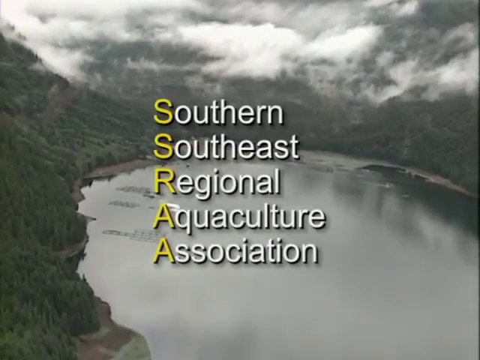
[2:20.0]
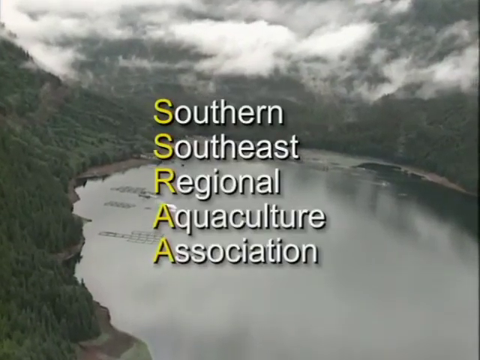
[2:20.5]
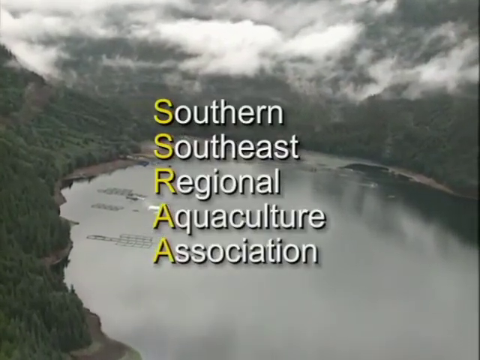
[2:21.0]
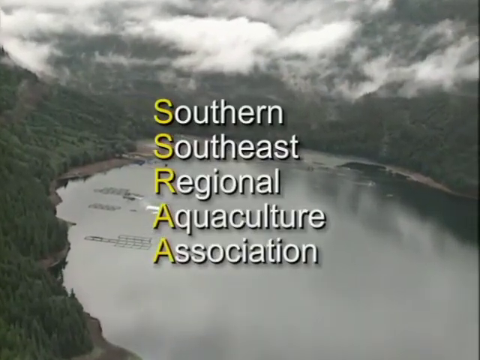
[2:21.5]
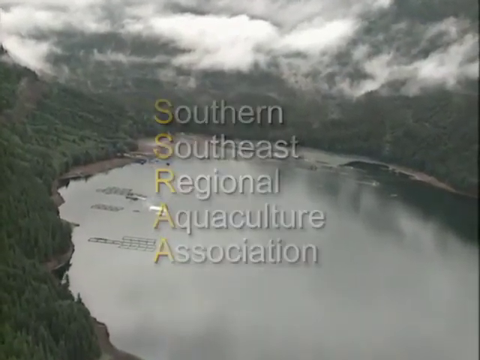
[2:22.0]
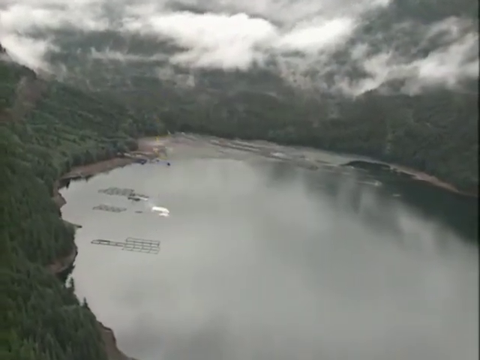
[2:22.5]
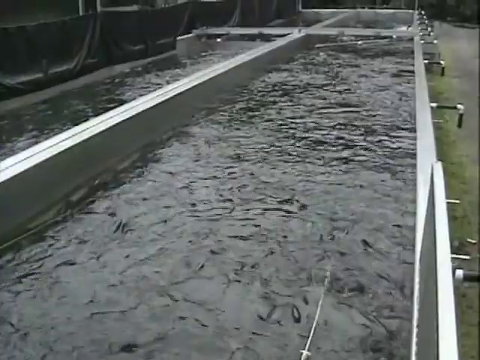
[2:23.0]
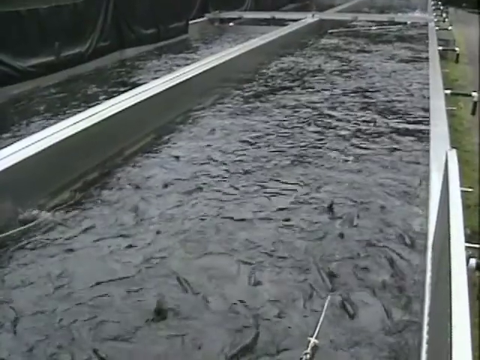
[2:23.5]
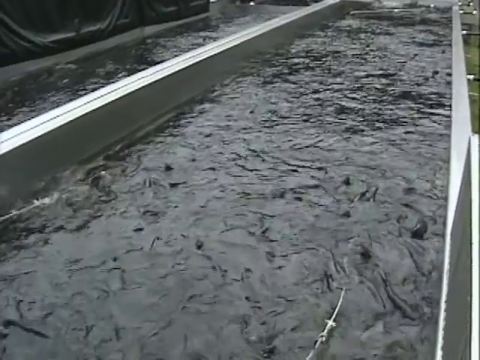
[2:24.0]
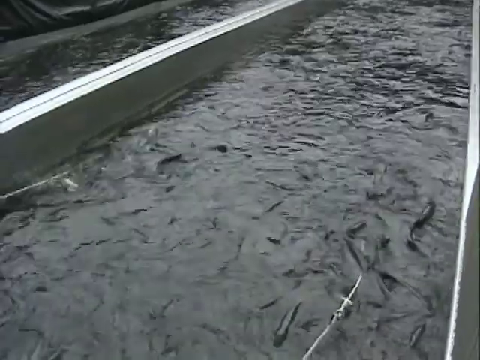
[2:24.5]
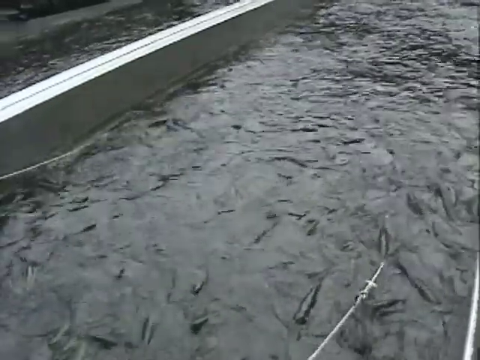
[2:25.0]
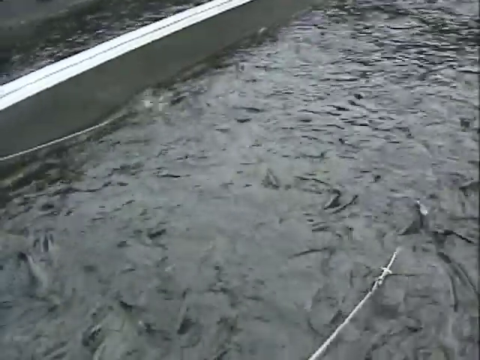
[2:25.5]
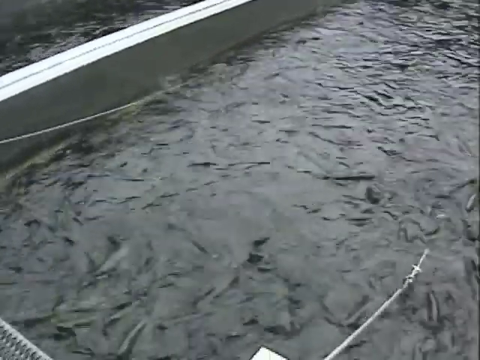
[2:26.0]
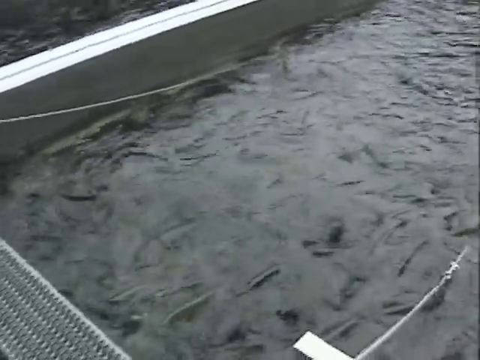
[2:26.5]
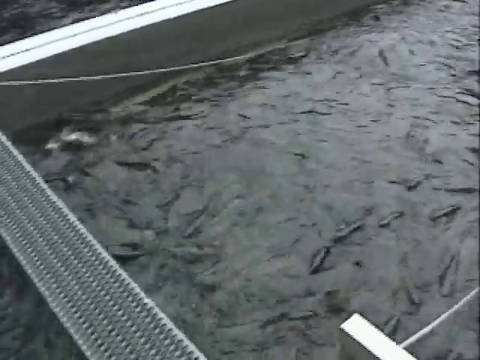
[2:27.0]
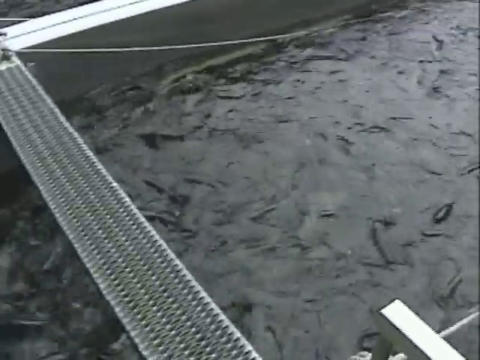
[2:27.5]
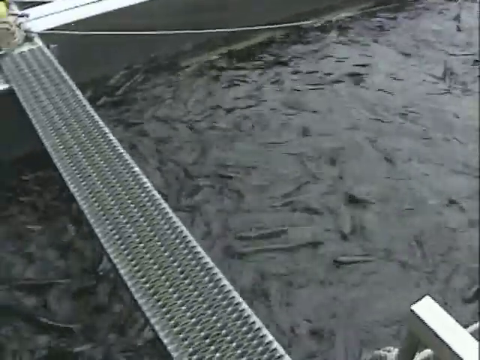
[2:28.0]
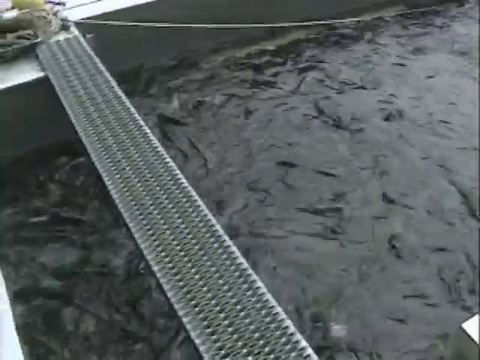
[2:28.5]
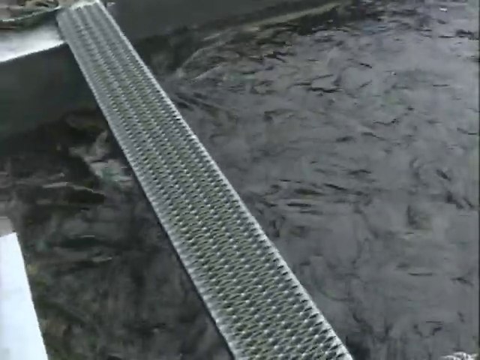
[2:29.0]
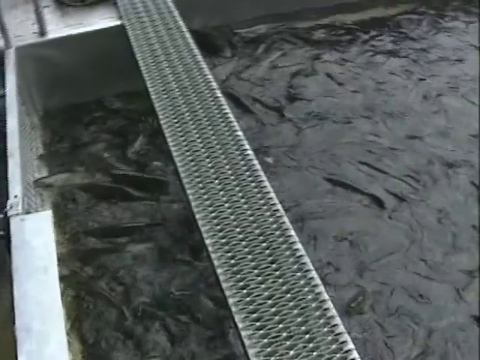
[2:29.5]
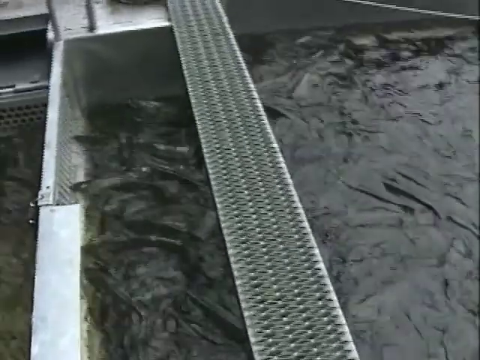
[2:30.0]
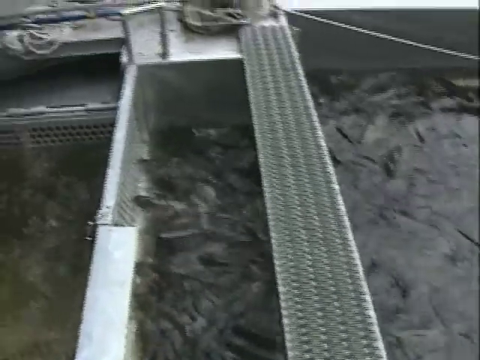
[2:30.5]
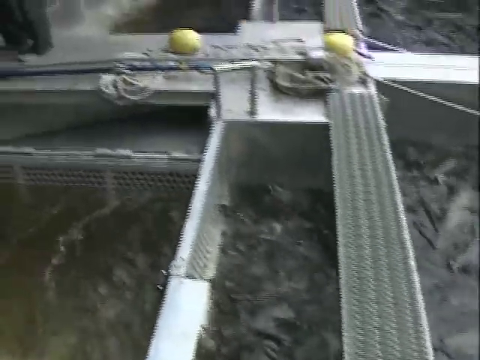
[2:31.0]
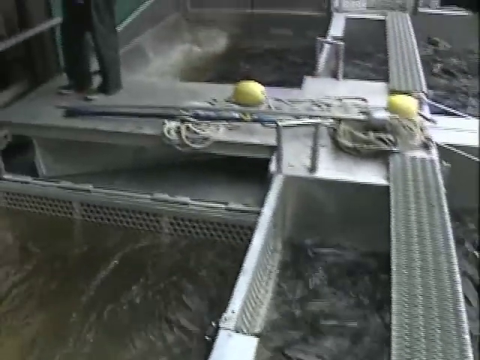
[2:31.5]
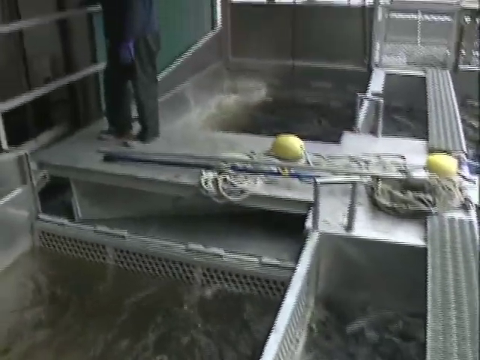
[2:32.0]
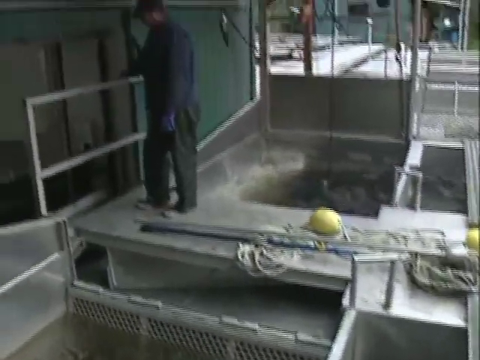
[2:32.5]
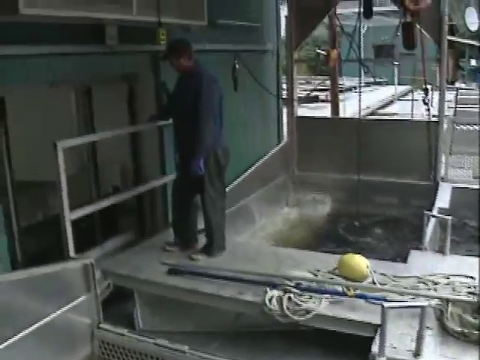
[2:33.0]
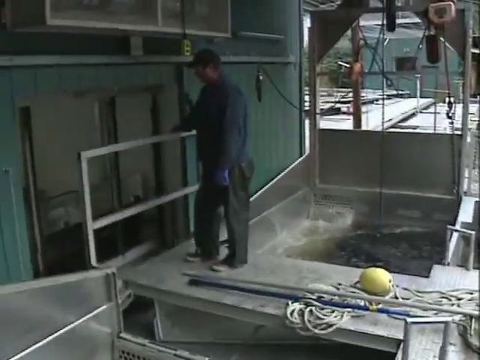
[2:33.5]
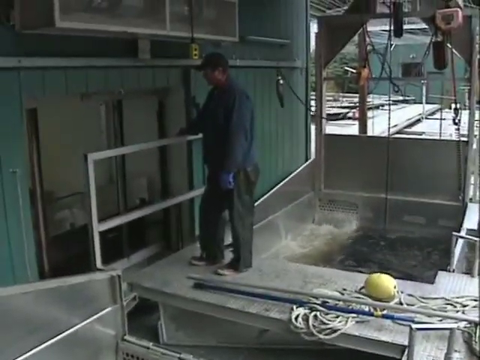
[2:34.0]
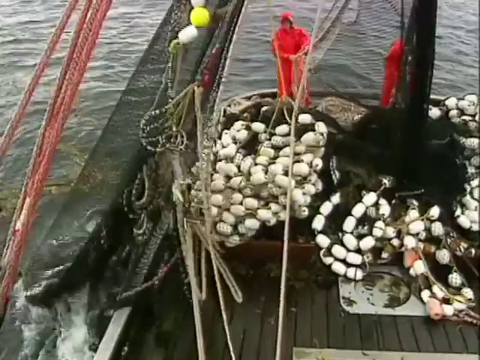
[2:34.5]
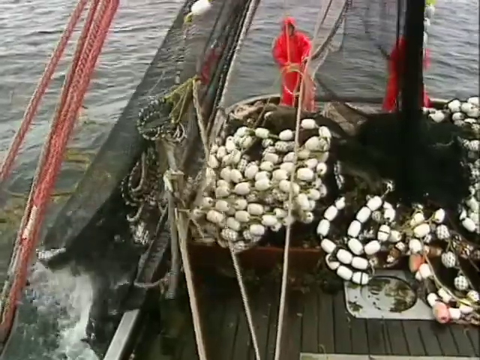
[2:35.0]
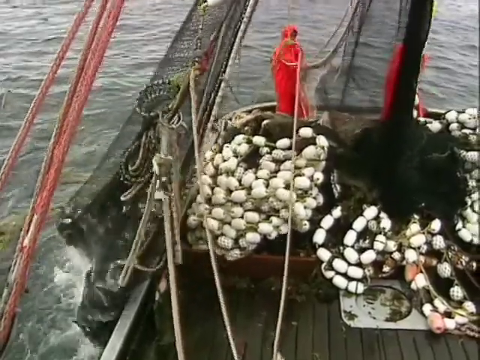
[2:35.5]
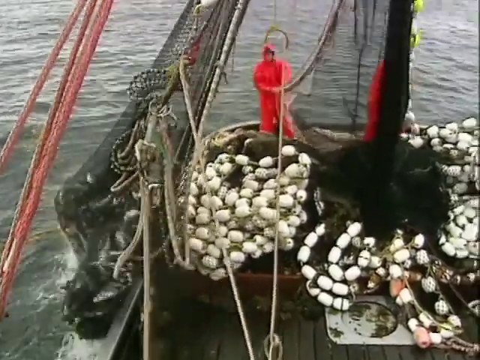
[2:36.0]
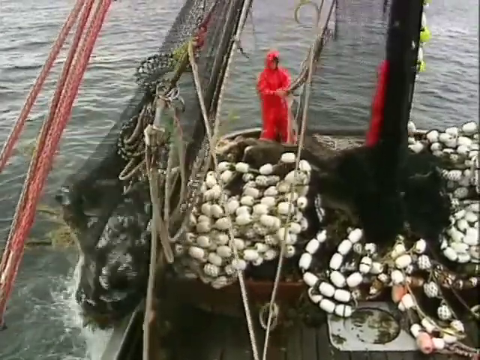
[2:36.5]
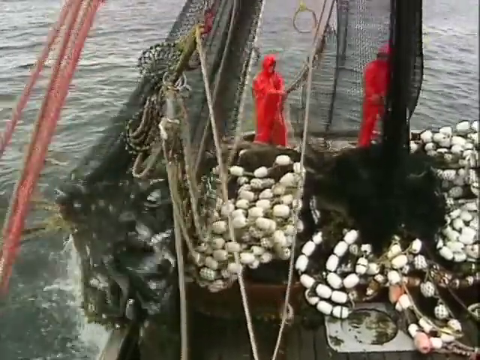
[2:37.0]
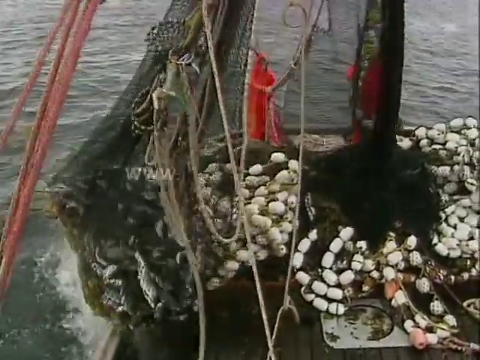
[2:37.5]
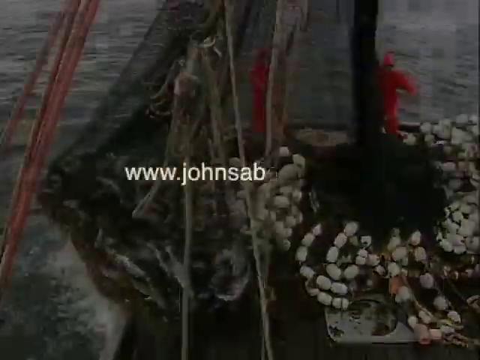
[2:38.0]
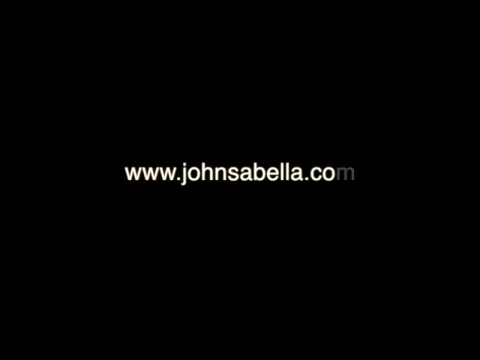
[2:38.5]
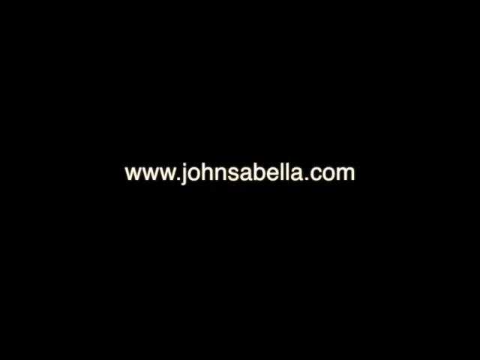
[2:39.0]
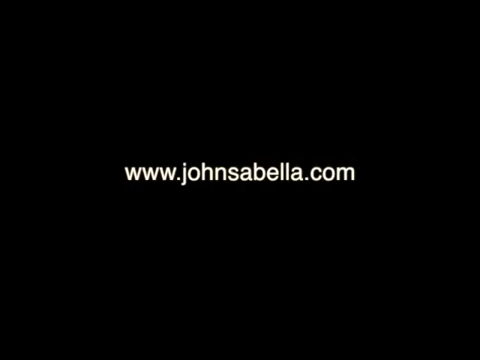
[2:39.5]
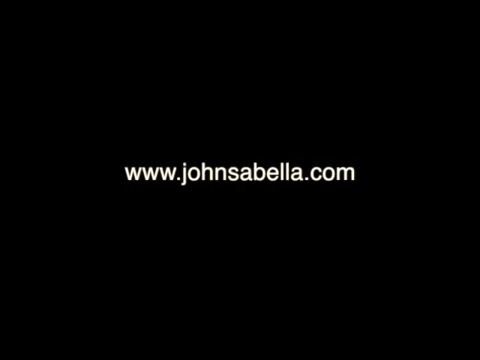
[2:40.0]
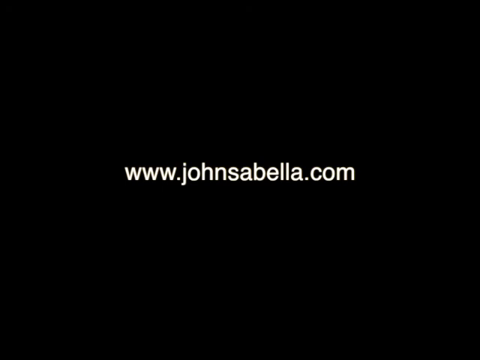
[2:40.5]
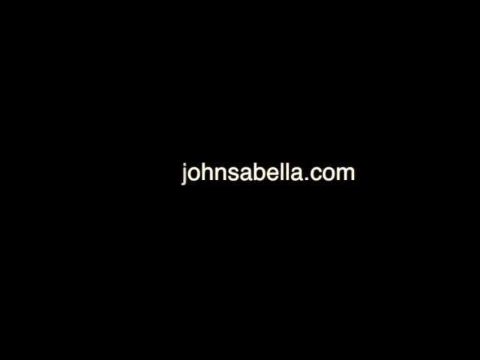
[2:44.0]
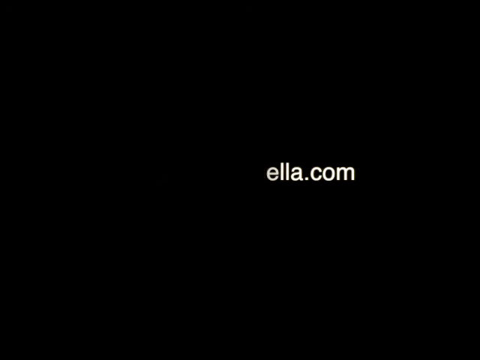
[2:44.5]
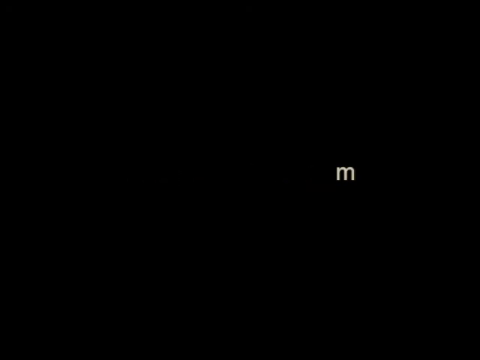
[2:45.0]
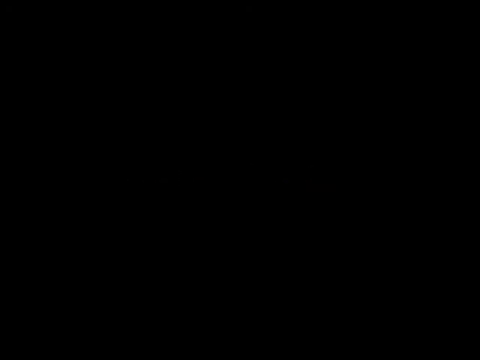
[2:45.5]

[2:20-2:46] An aerial shot shows a lake surrounded by large hills filled with trees, with thin, white, wispy clouds at the top of the screen. In the center of the screen is a column of five words, "Southern Southeast Regional Aquaculture Association", with the first letter of each word highlighted yellow. The words disappear from the screen. The scene changes to what looks like two large metal containers filled with water, with a metal partition between the two large troughs. The camera hovers over the water, where fish jump slightly above the surface and swim around; there look to be dozens and dozens of these black fish. The camera pans to the left, showing a metal rectangle over the trough on the right side, then pans upward and to the left to a man who appears to be a worker, wearing a blue uniform and a blue baseball cap, holding onto a metal fence and looking to the left side of the video. Next, two fishermen on a boat reel up a black net, with large strings of white cylinder-shaped buoys in front of and around them; the fishermen wear long red raincoats. Then the website "sabella.com" is shown for a few seconds before it erases from left to right.